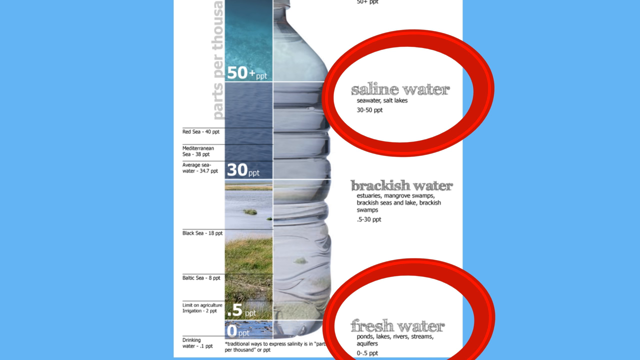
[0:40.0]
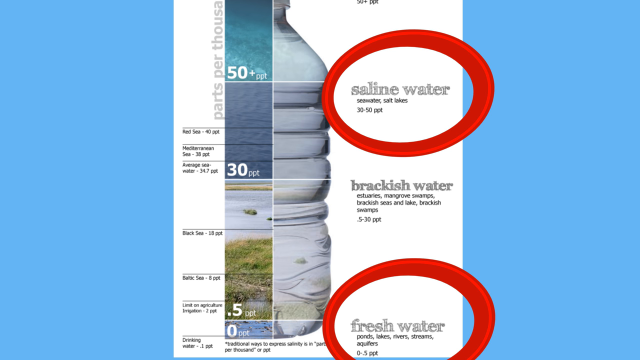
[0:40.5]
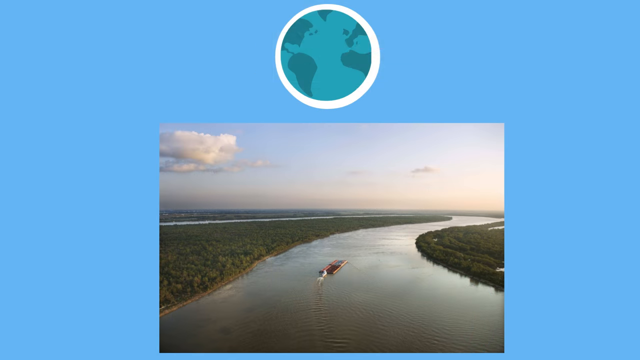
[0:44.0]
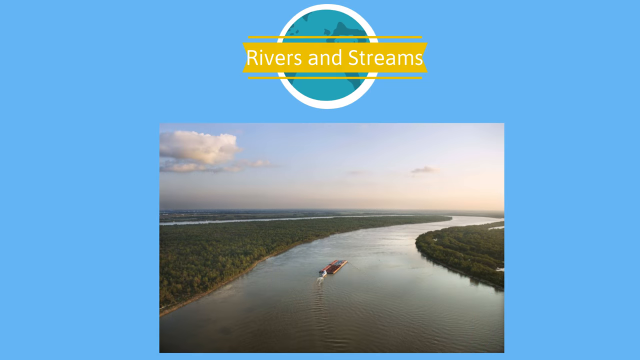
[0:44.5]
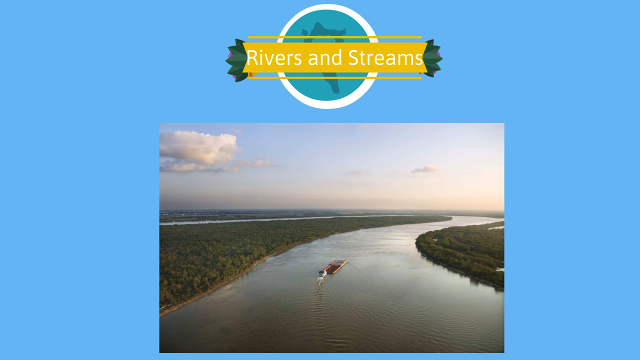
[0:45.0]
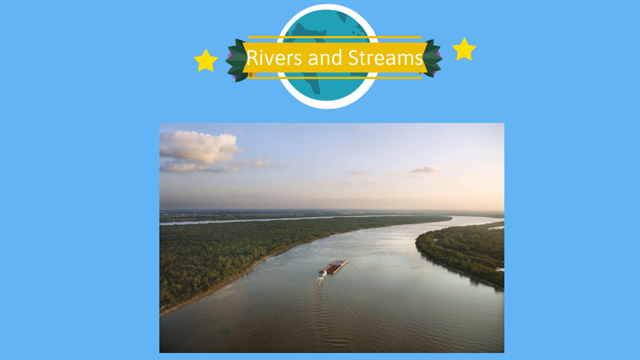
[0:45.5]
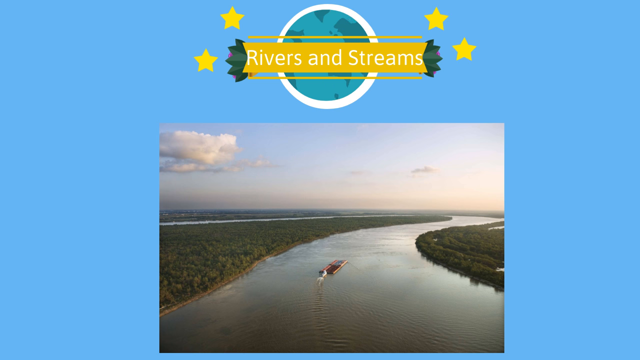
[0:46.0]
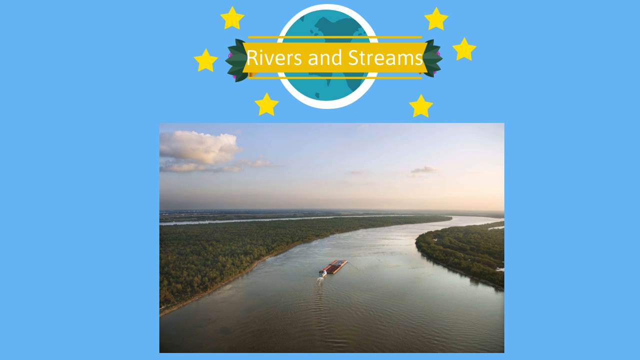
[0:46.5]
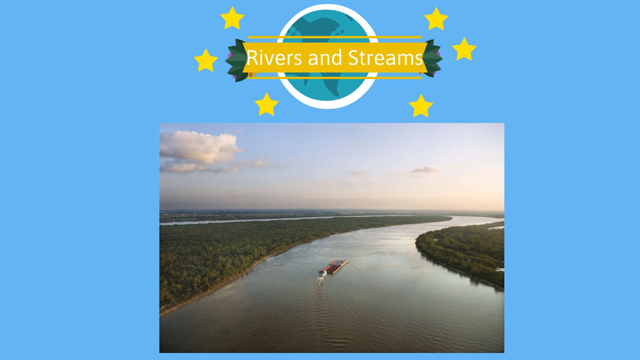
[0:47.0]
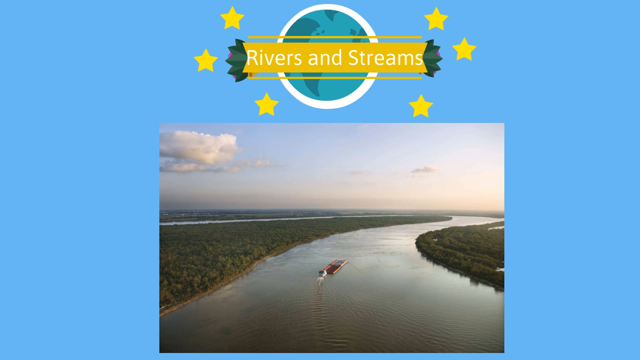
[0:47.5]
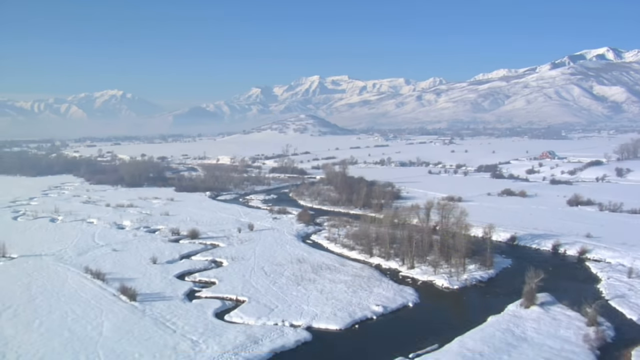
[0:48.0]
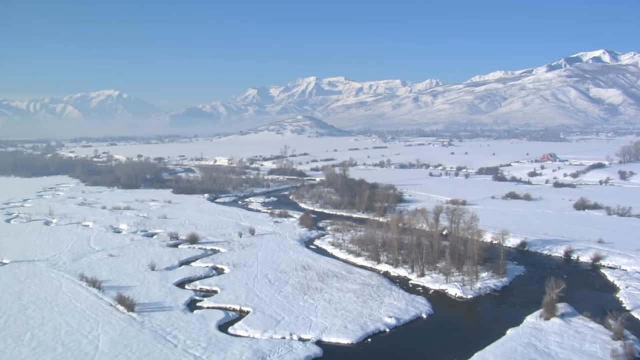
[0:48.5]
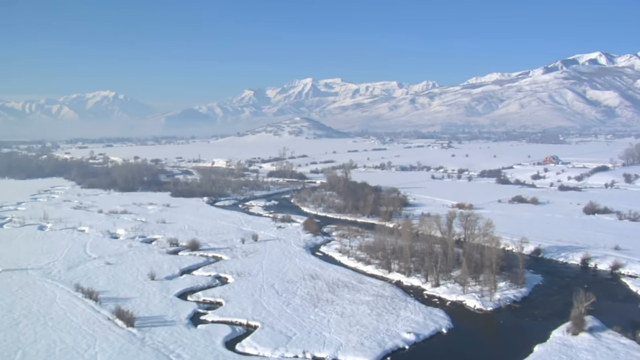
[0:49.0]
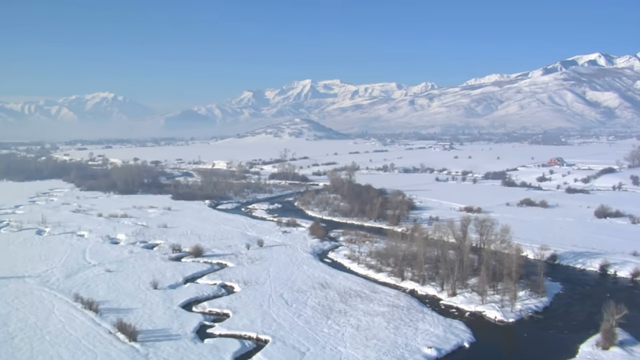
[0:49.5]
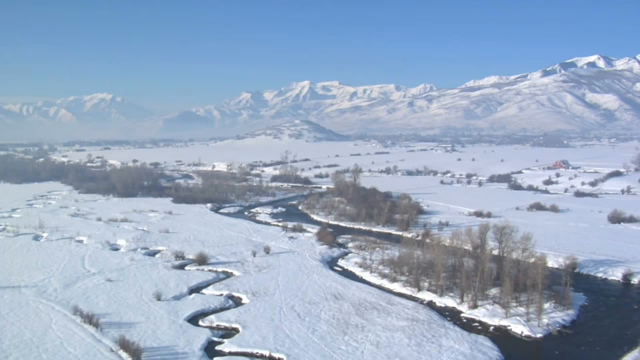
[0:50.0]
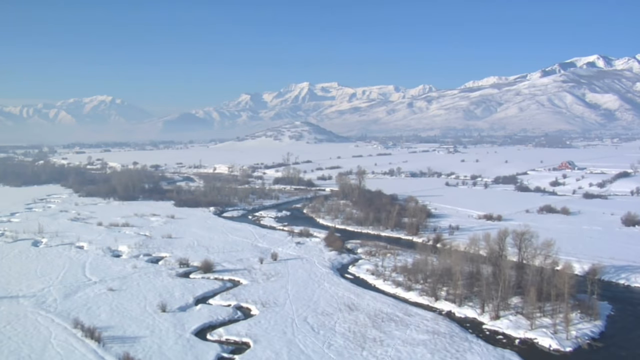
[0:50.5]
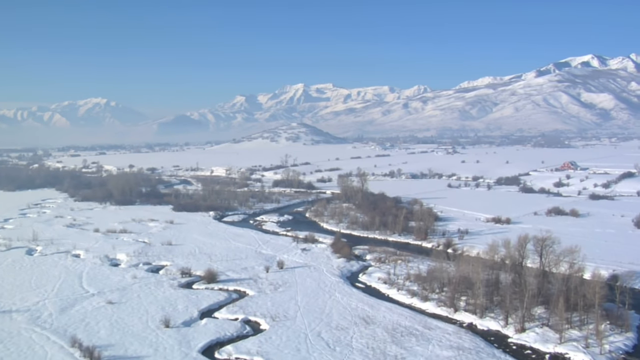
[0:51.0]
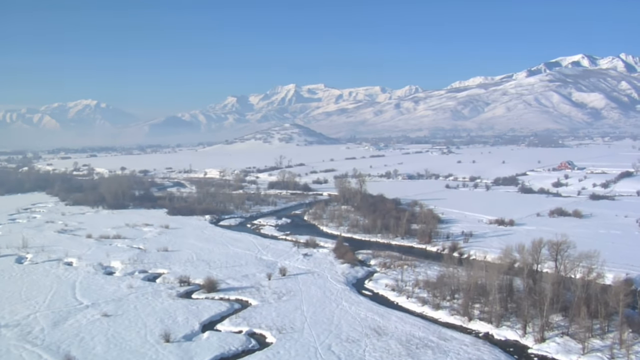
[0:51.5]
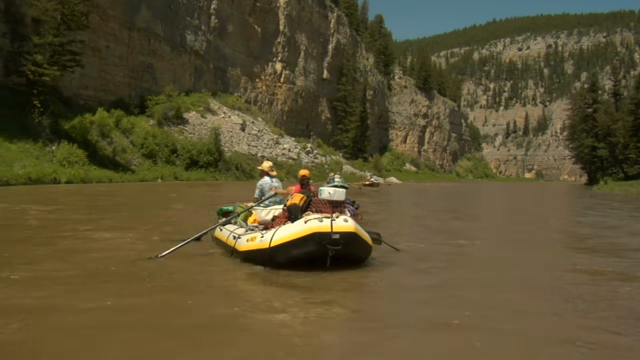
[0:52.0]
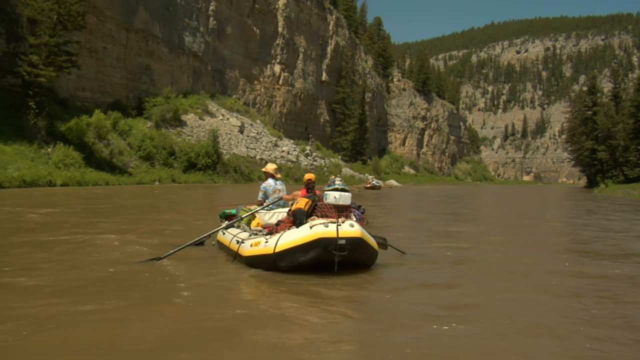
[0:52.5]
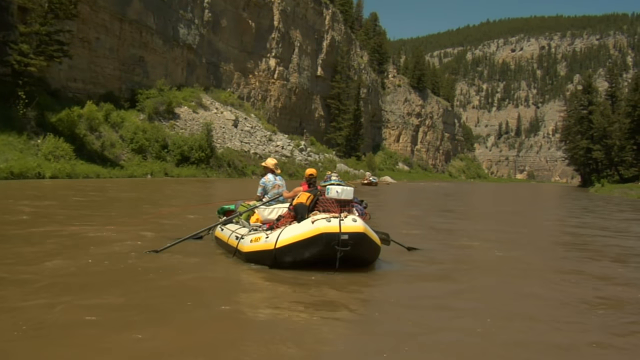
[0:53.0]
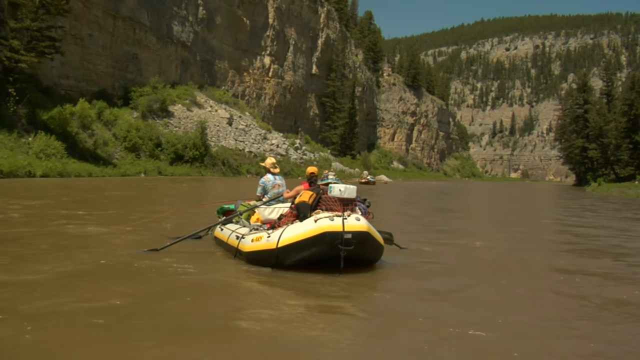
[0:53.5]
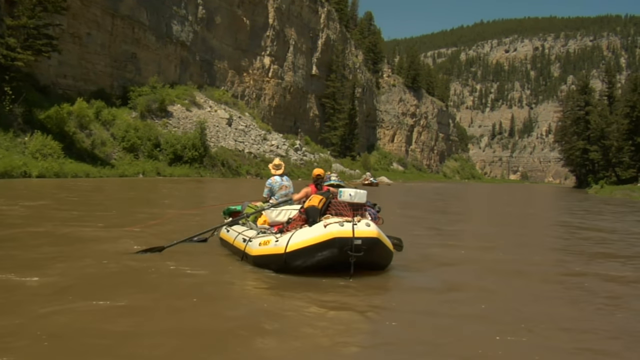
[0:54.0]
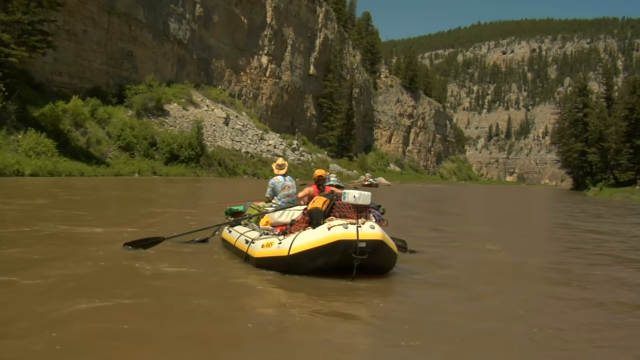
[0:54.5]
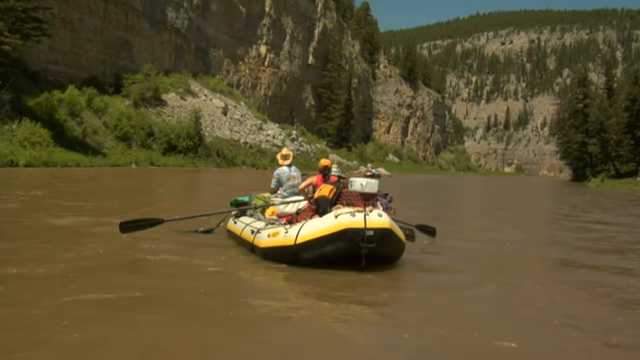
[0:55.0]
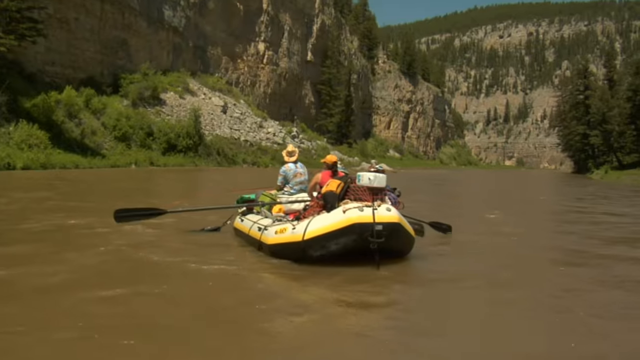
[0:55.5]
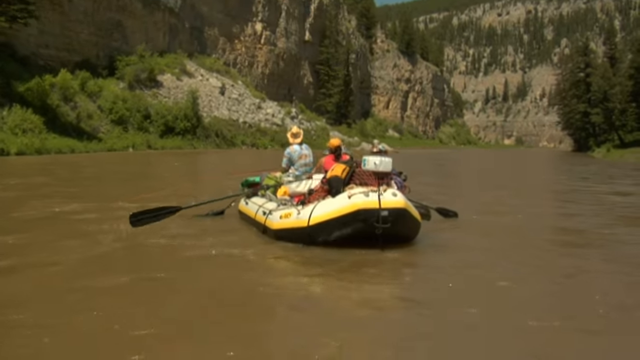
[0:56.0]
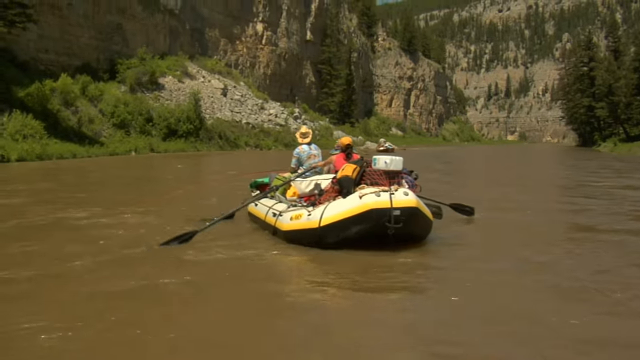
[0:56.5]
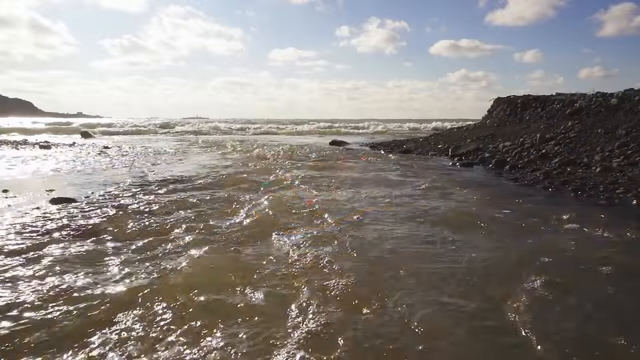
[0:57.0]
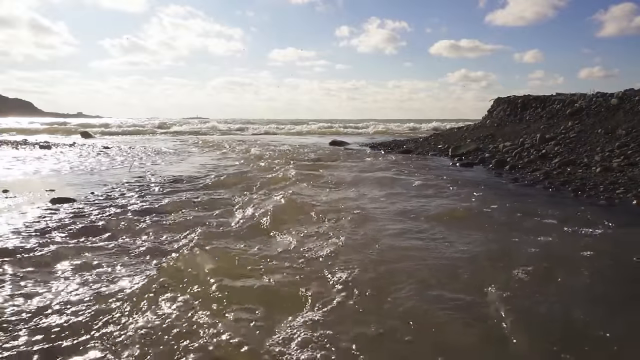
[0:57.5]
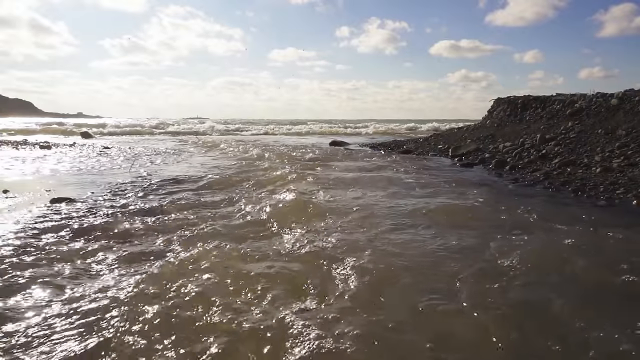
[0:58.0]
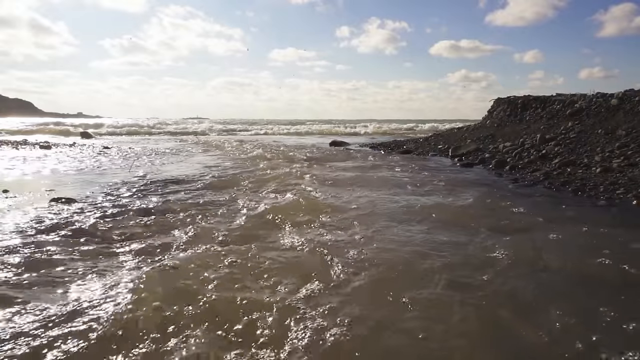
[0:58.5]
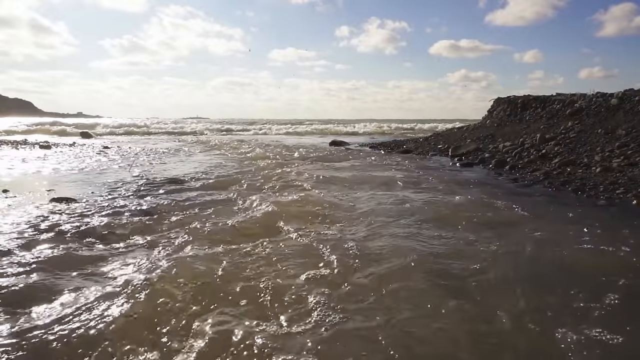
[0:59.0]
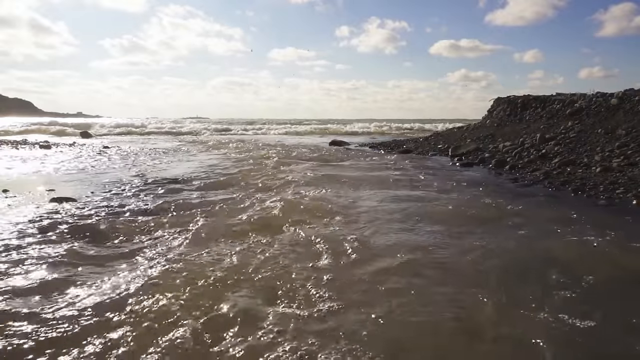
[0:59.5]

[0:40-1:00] Rivers and streams run through snow-covered areas and mountainous valley regions with tall river banks, miles and miles of river winding through the snow. The snow-covered river looks open rather than frozen over. Several people raft on the river on a big raft, and a boat is on a river. Mountains are in the background, and tributaries or streams branch off the river. Summer scenes show people on the river paddling.